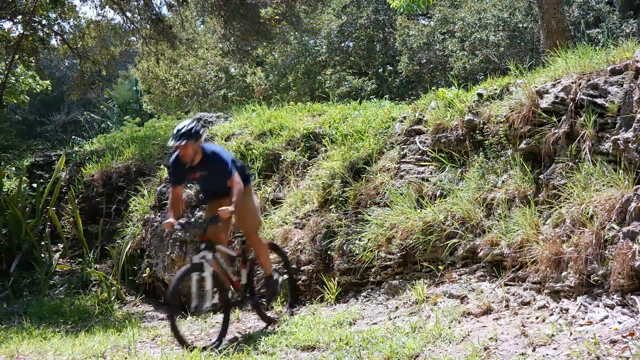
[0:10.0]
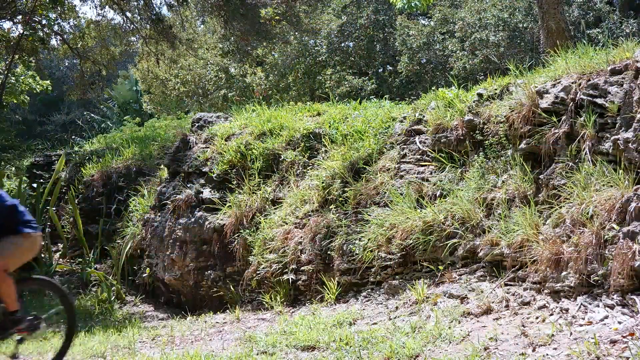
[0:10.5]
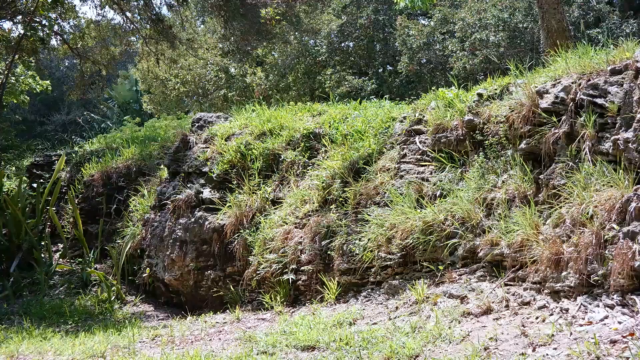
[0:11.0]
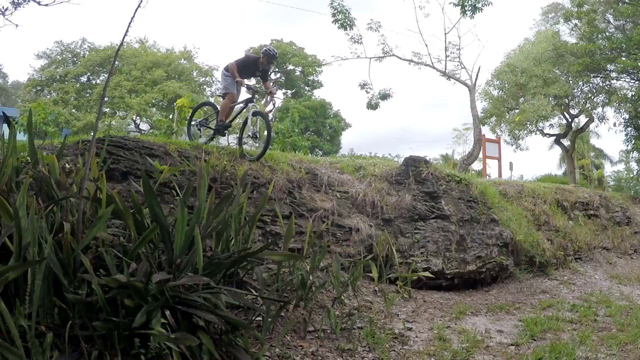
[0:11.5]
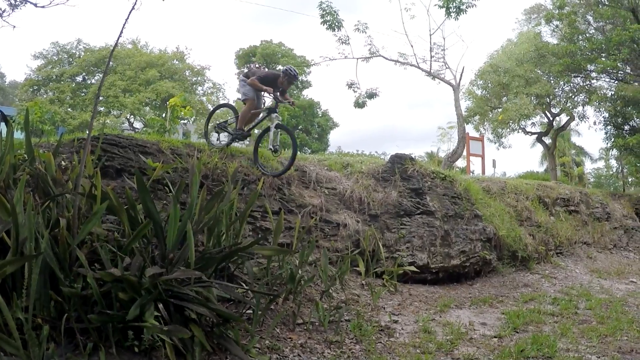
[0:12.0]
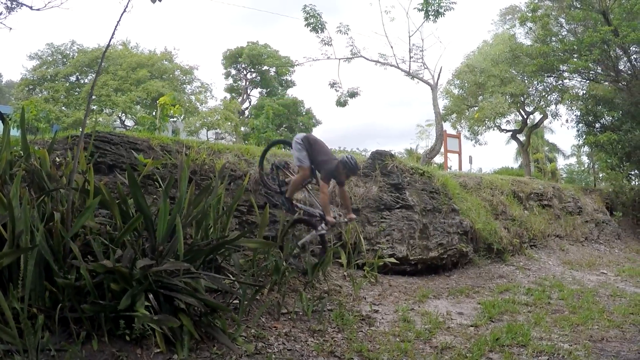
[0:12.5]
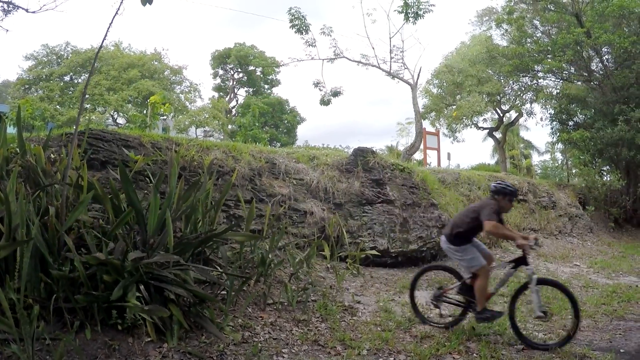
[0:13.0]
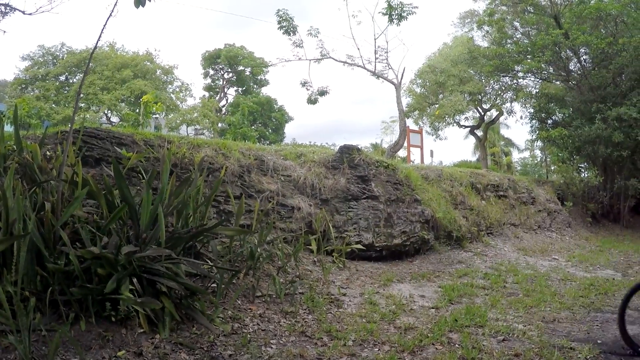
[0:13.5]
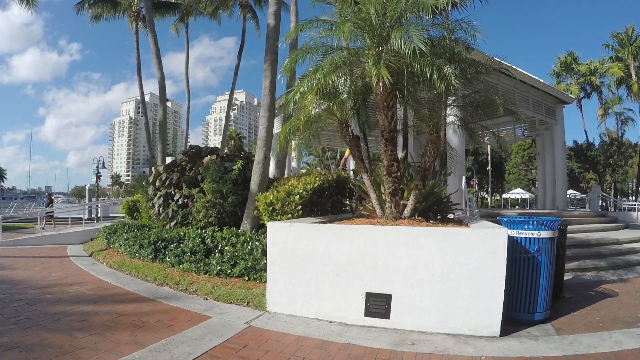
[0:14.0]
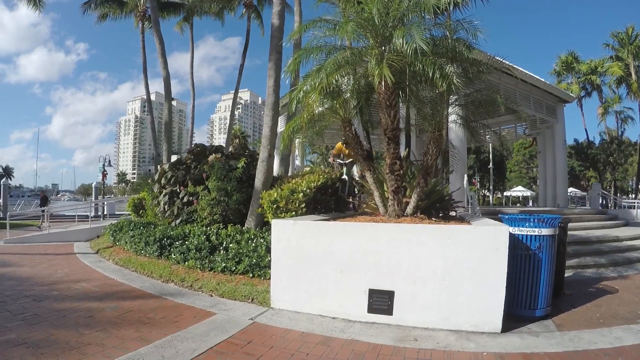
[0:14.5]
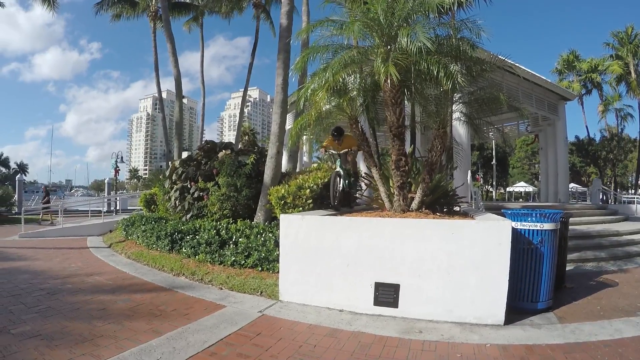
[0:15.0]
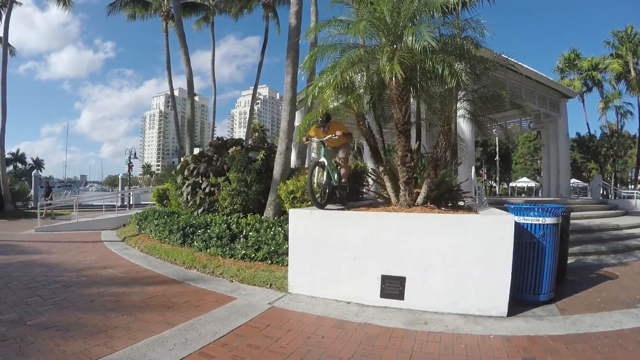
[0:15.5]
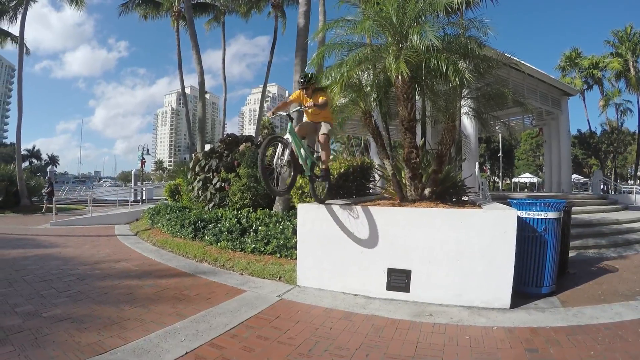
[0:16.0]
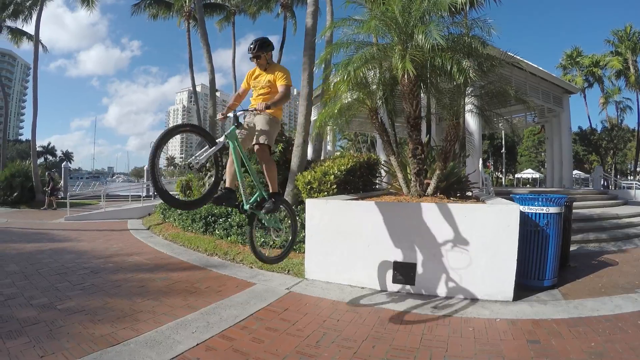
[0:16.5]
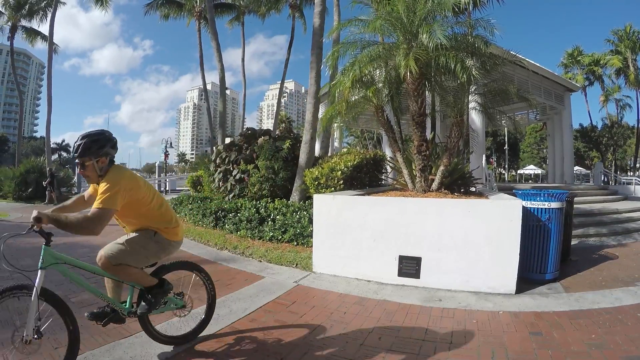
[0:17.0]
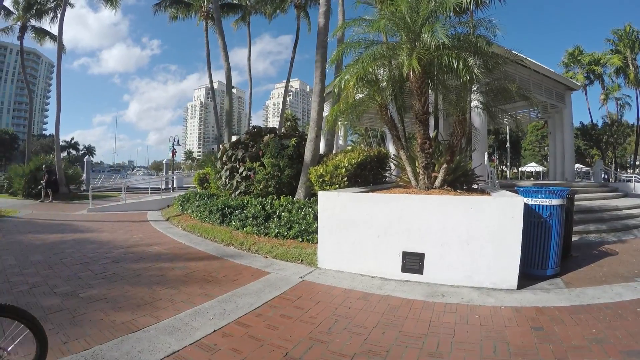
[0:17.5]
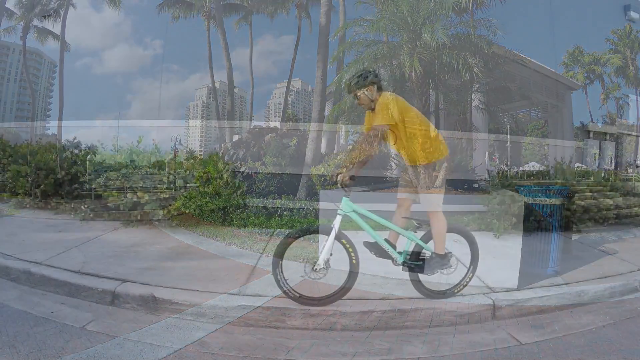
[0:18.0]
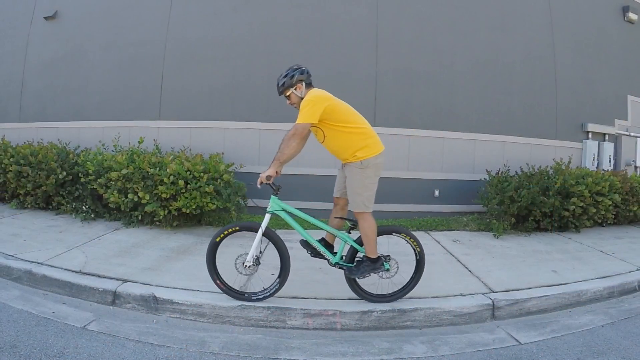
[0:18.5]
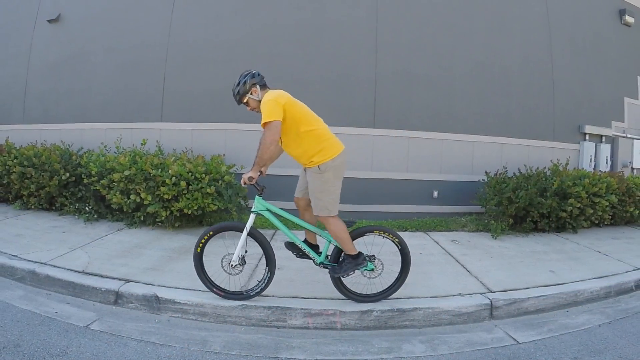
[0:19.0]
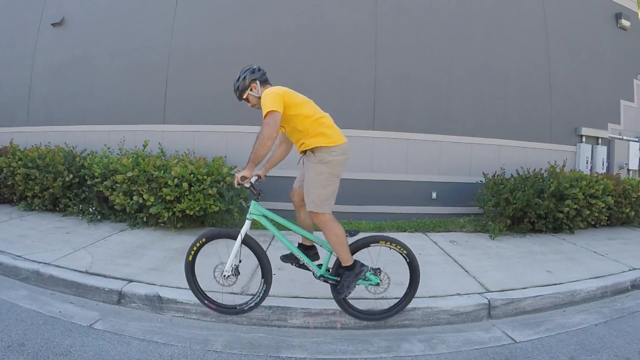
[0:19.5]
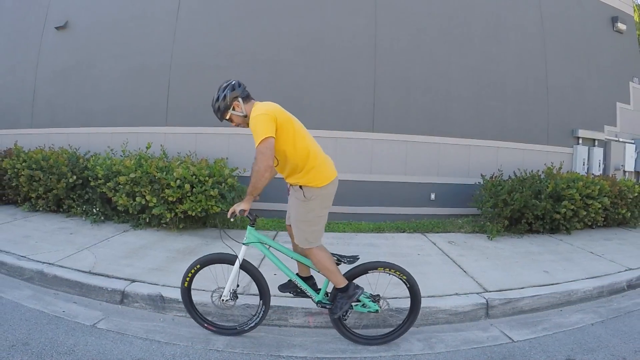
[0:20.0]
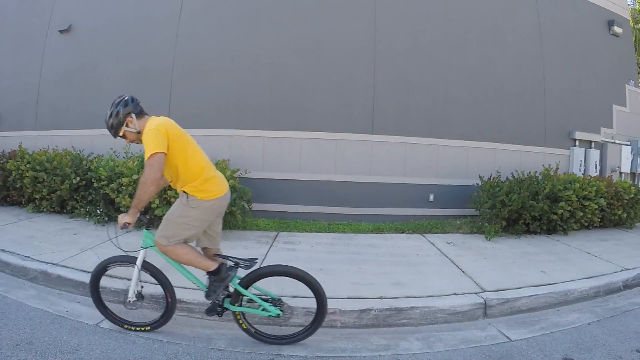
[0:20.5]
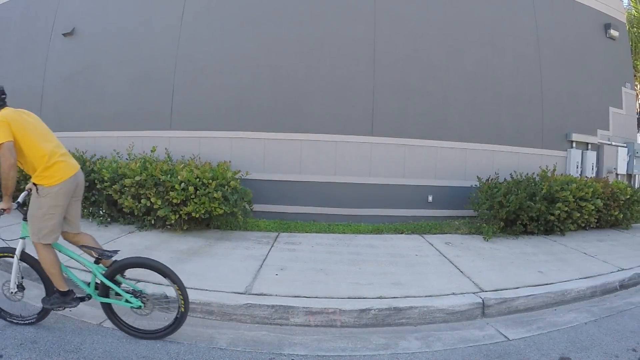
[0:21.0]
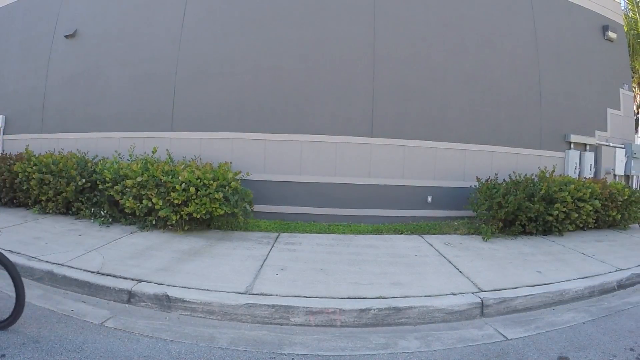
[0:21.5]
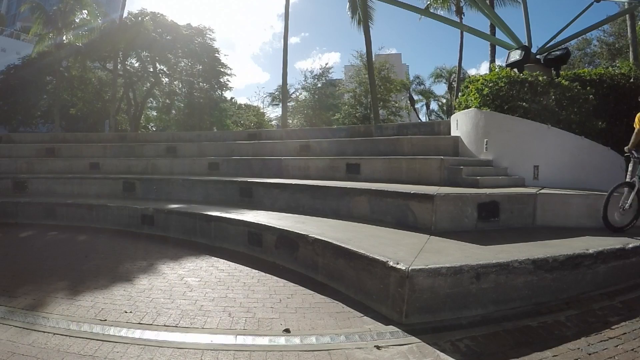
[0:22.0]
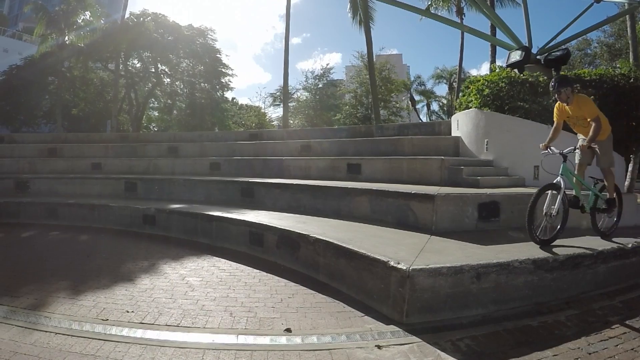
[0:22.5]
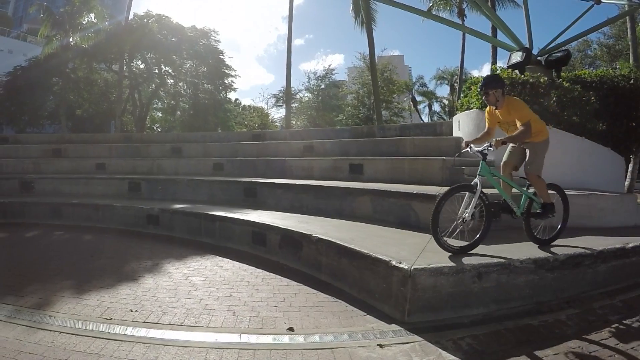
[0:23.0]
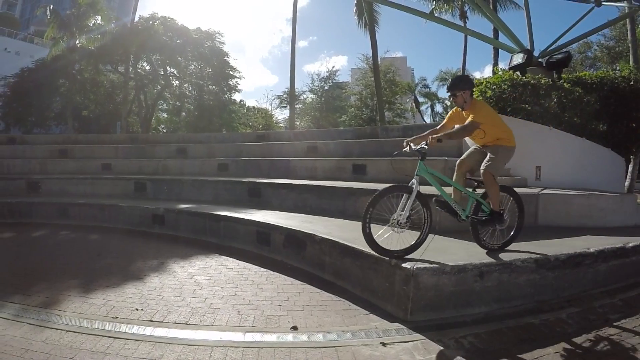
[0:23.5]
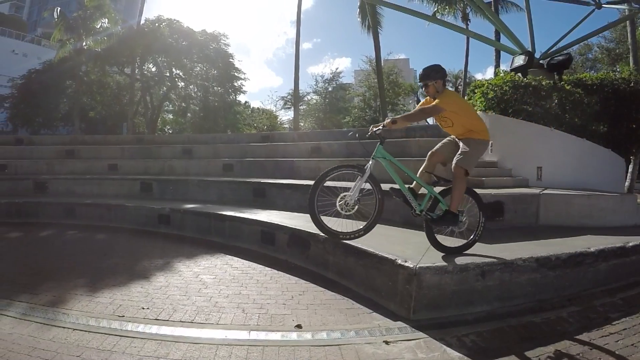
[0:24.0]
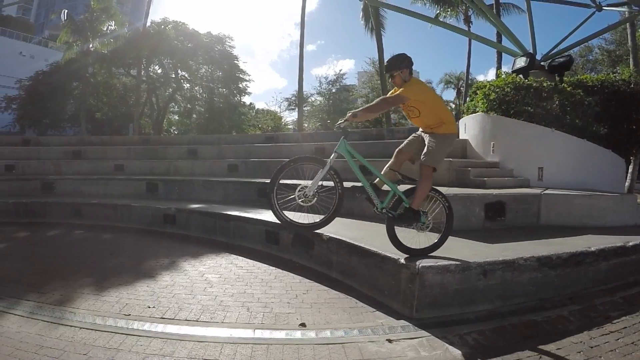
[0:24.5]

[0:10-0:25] A man rides his bike in various settings. First, he goes down a semi-steep cliff outdoors. Next, the man, who wears a yellow shirt and a black safety helmet, jumps off a concrete planter onto bricks in a very urban setting. He then rides on the sidewalk, immediately stops, and, while still on the bike, jumps off the sidewalk onto the road in a single motion. Finally, he rides off concrete steps in an outdoor setting.